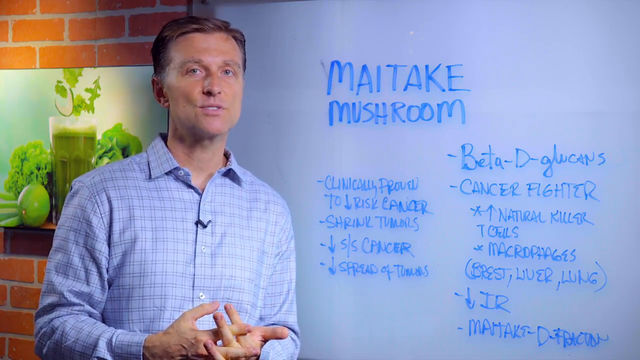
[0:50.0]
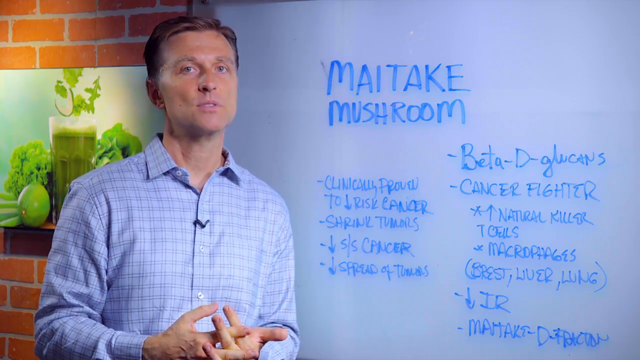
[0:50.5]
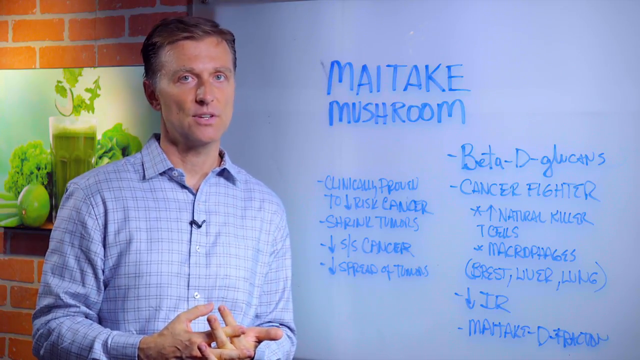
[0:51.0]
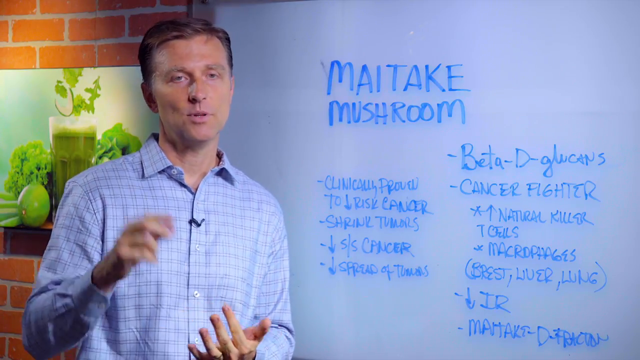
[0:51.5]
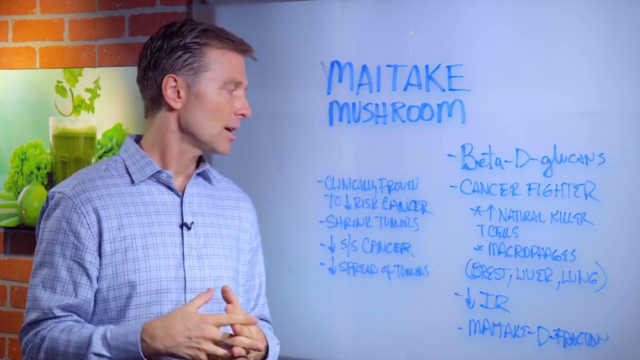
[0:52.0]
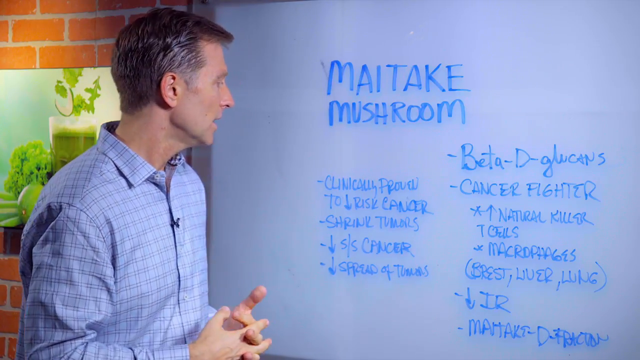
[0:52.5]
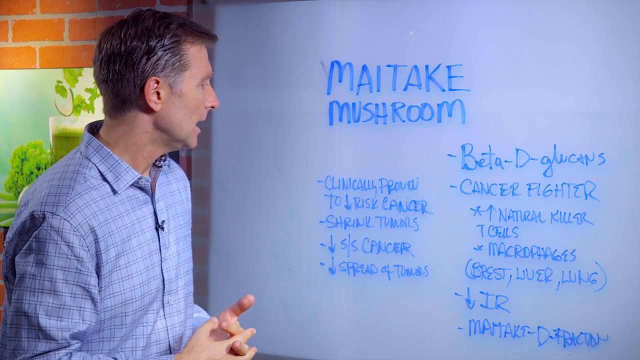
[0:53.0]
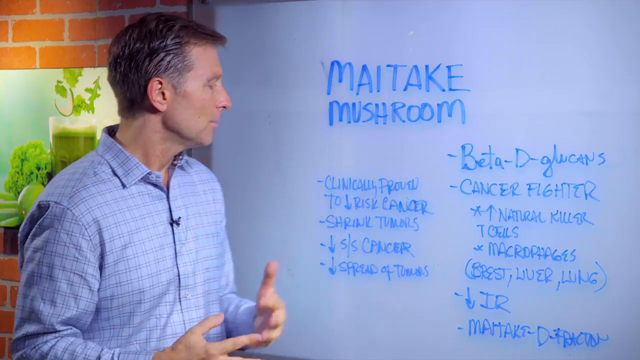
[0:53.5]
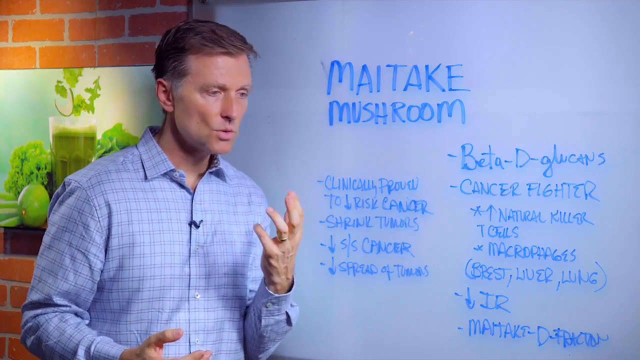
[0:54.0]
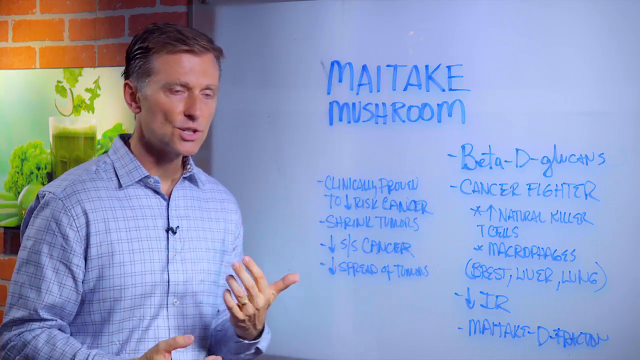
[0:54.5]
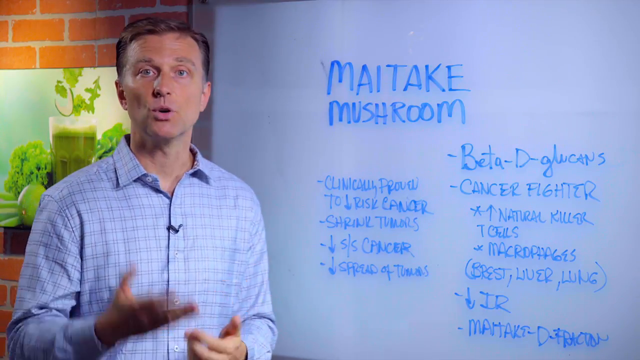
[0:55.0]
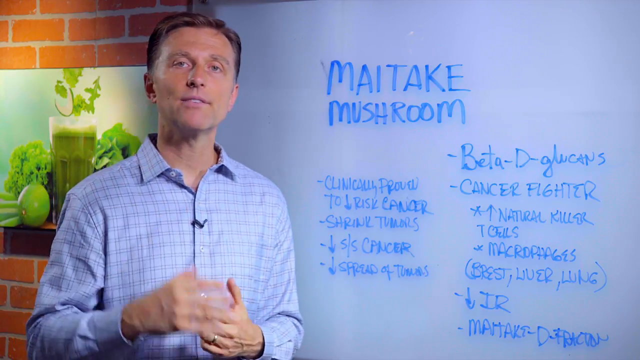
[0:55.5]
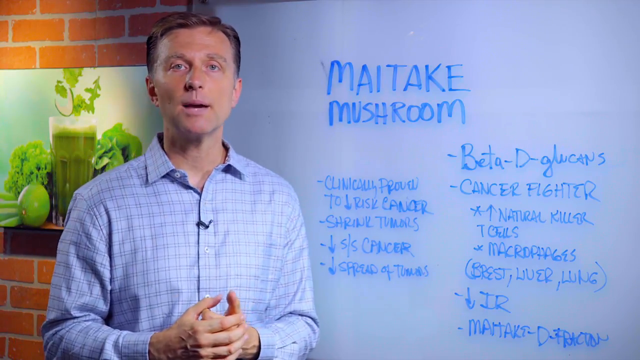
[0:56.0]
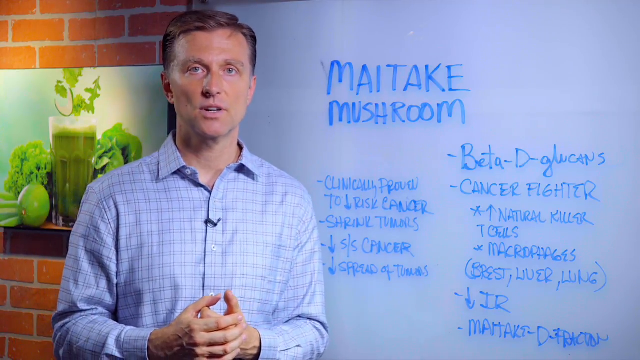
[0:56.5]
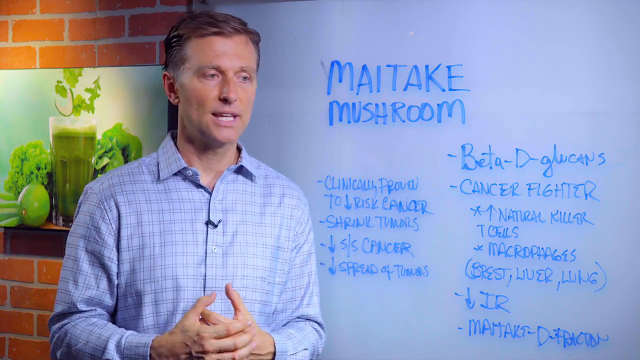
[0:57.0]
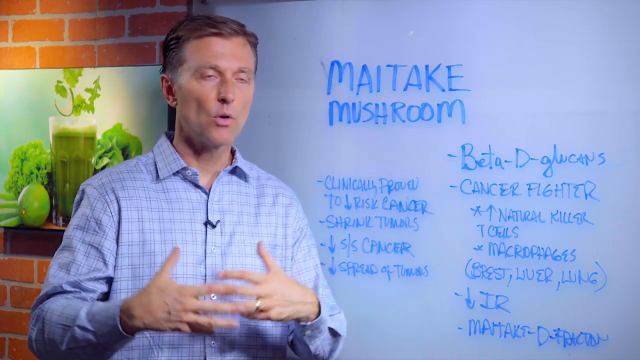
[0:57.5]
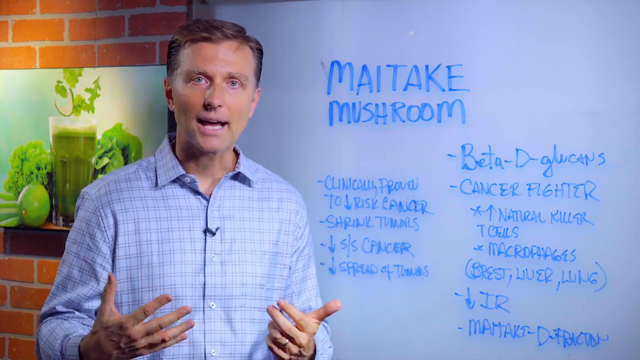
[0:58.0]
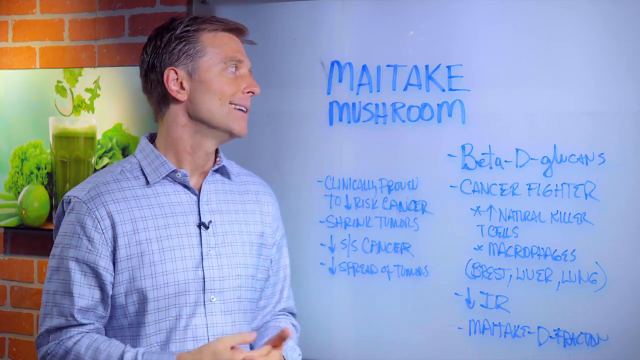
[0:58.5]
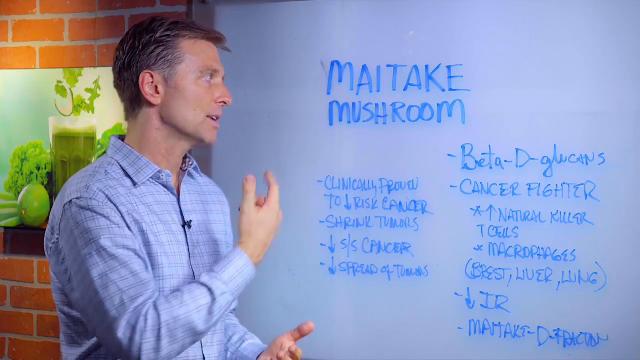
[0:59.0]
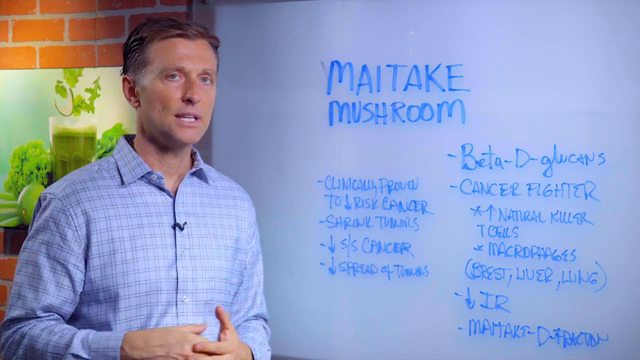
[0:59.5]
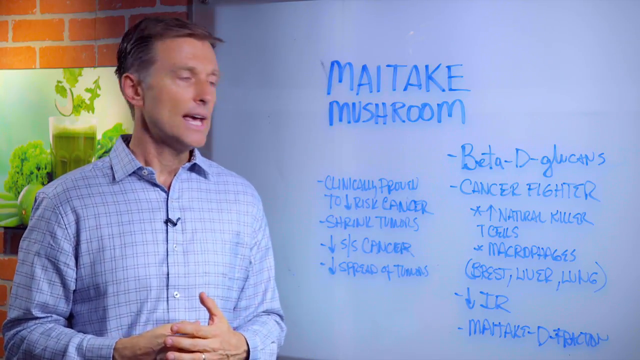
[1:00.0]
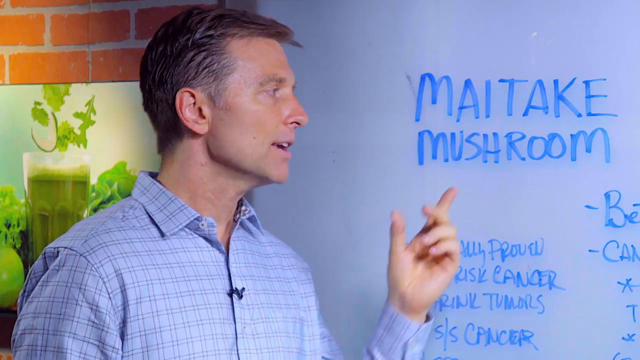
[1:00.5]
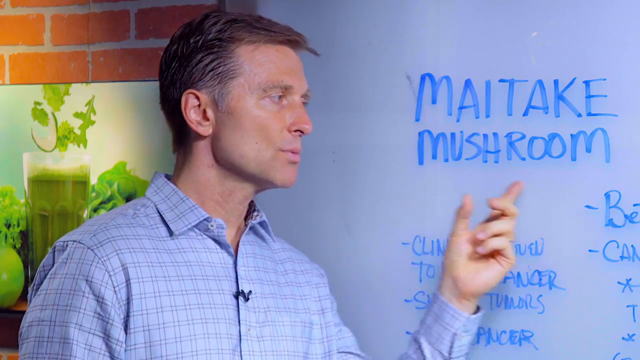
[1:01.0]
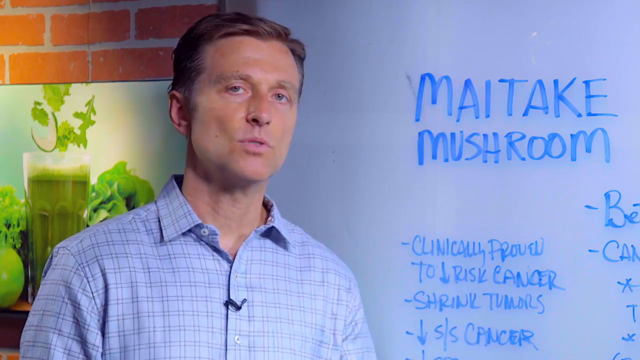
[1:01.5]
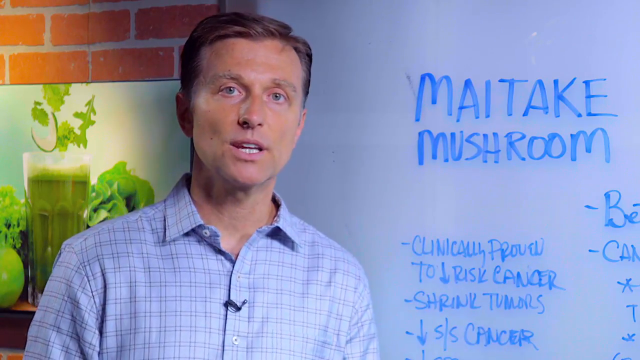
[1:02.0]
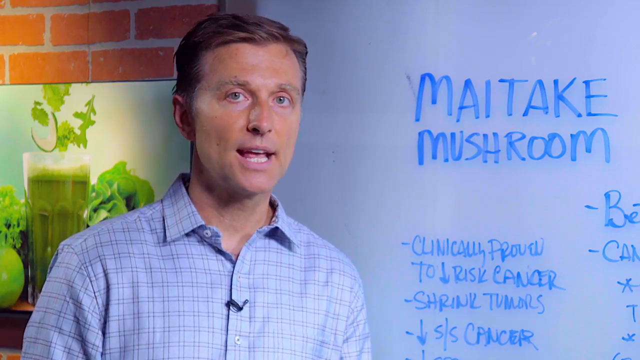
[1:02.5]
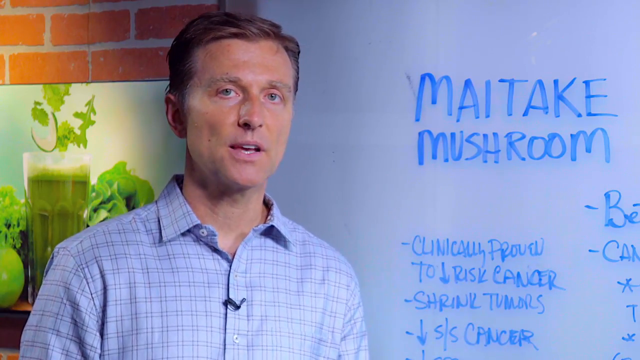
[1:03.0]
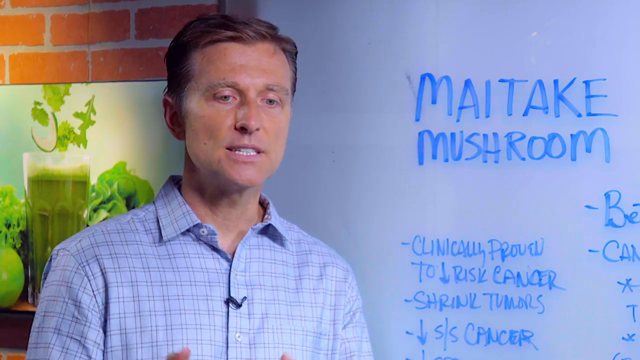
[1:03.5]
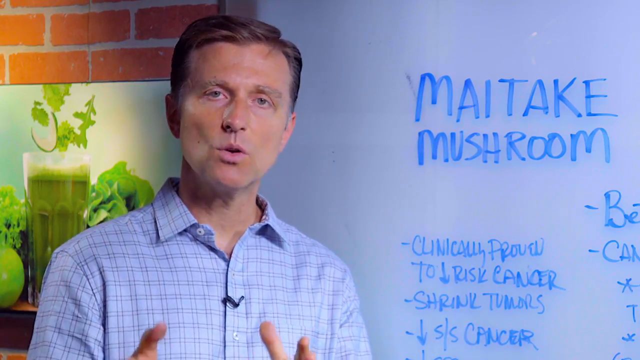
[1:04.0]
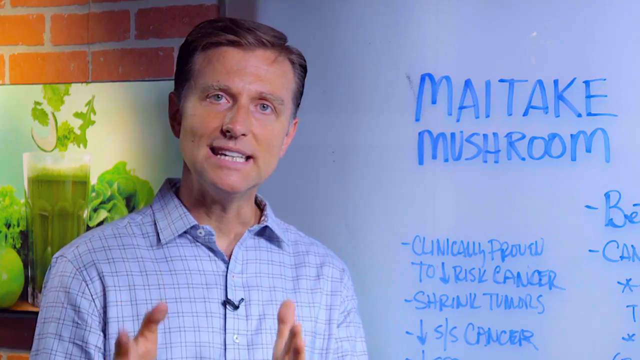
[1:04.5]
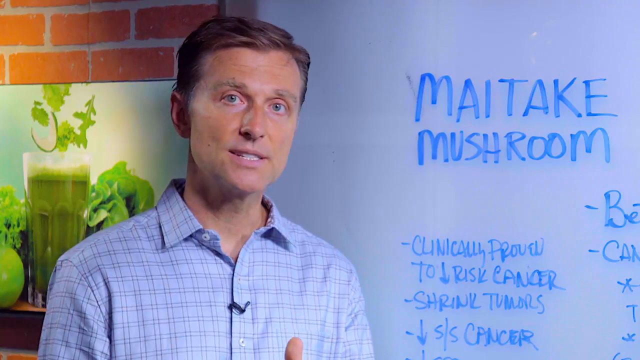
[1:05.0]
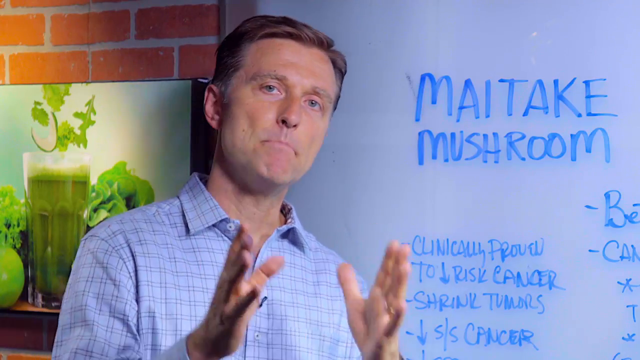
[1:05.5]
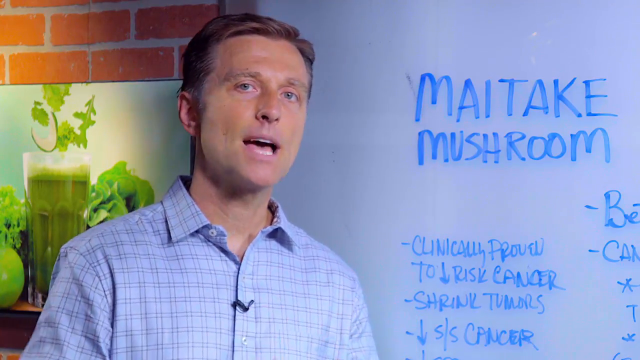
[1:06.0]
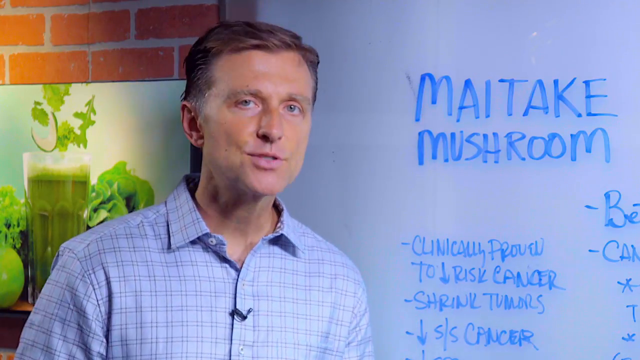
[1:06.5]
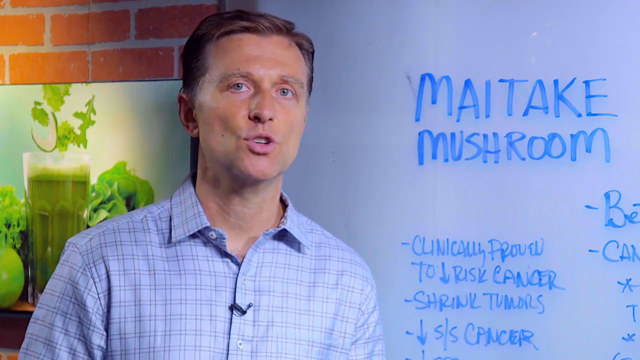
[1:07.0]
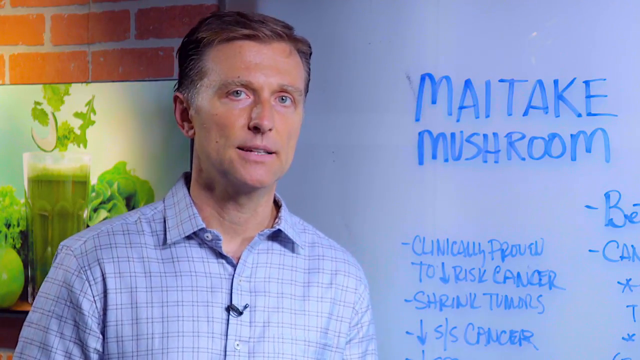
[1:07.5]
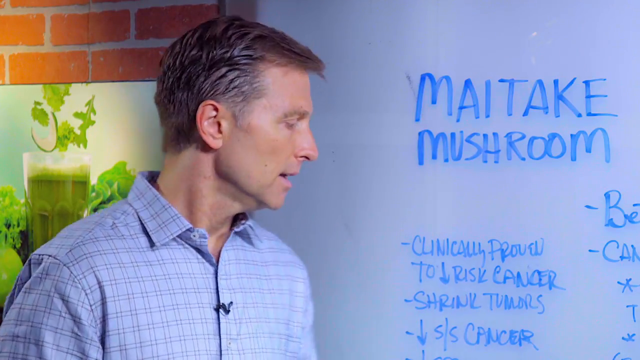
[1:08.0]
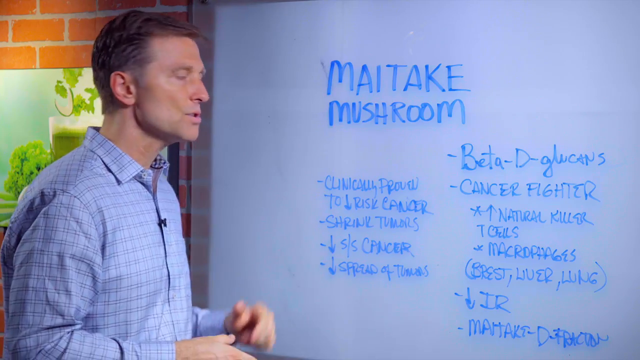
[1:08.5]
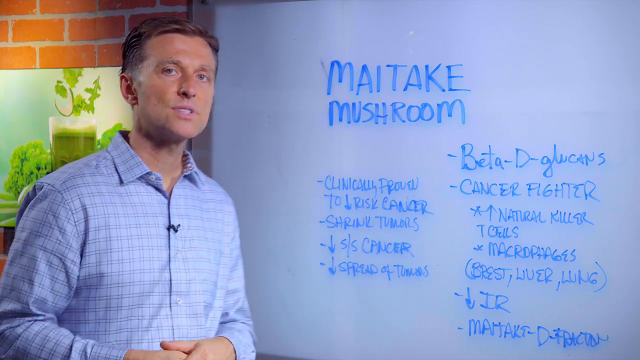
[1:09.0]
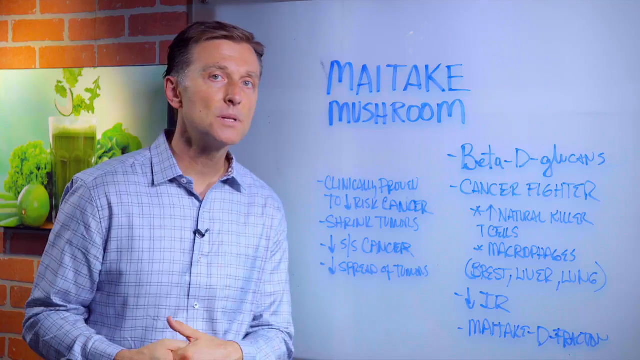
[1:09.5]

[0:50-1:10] The man is on the left-hand side of the screen, still speaking about the mushroom recipe written on the whiteboard. He turns toward the whiteboard and keeps making hand gestures: he puts his left hand out, then his right hand out in front of him, and interlocks them while continuing to speak into the camera. He spreads his hands apart, points with his right pointer finger at the title of the recipe, "MaiTake Mushroom", and turns back to the camera. The camera zooms in on the speaker, and he points at the title again with his index finger. His hands are mostly out of the frame unless he raises them, which he does a couple of times. The camera angle then returns to normal, and he points at the left column of health benefits.